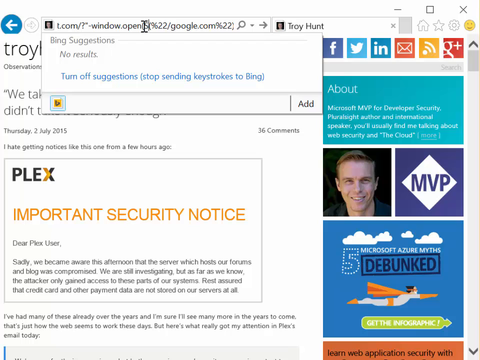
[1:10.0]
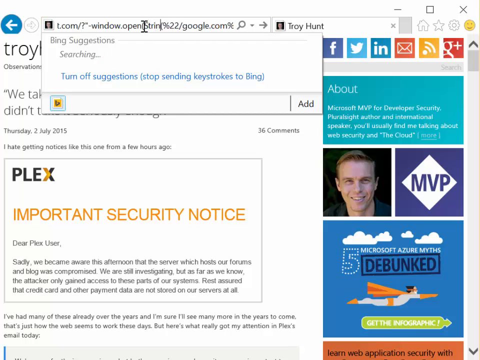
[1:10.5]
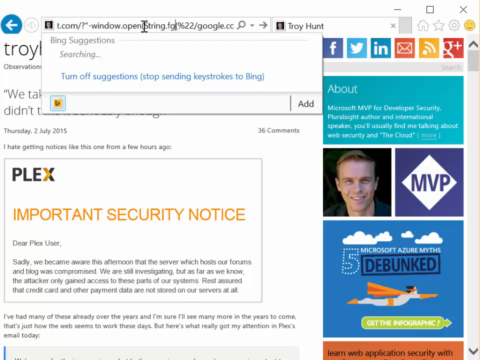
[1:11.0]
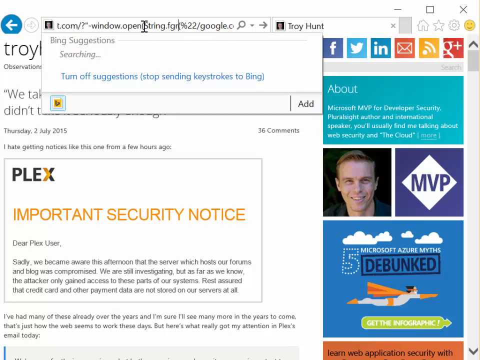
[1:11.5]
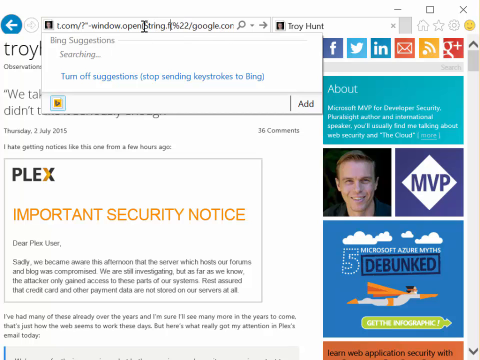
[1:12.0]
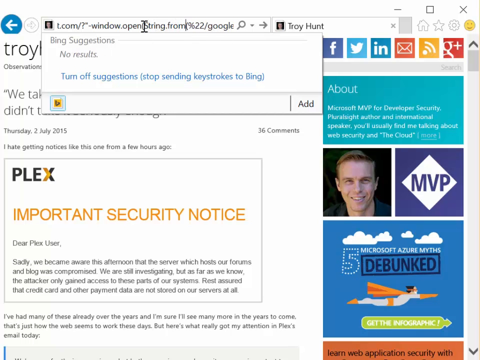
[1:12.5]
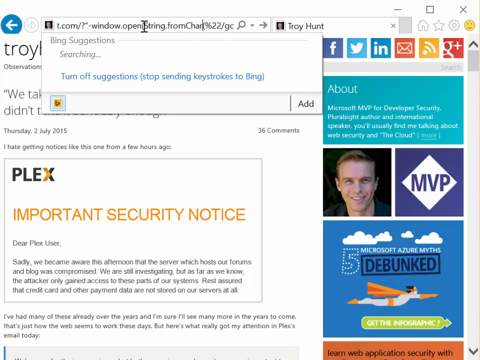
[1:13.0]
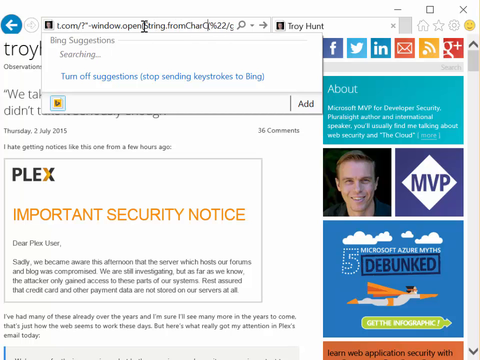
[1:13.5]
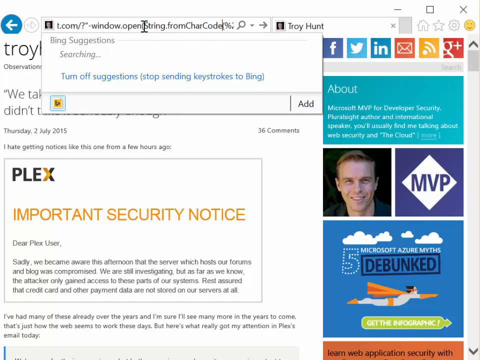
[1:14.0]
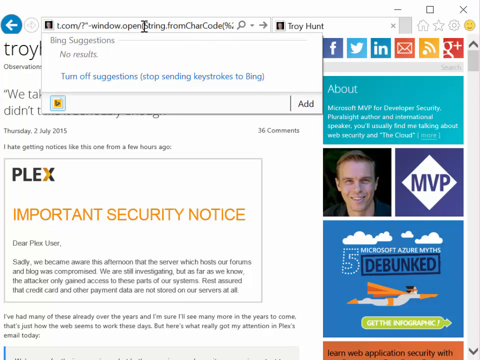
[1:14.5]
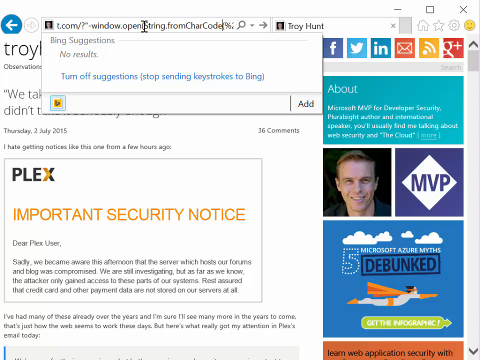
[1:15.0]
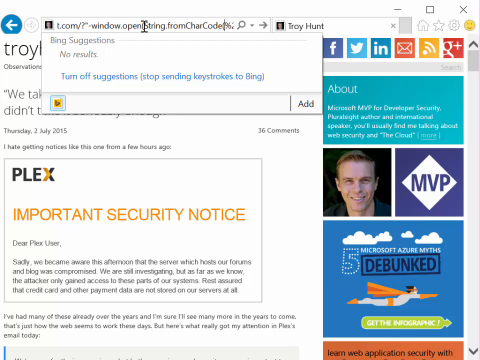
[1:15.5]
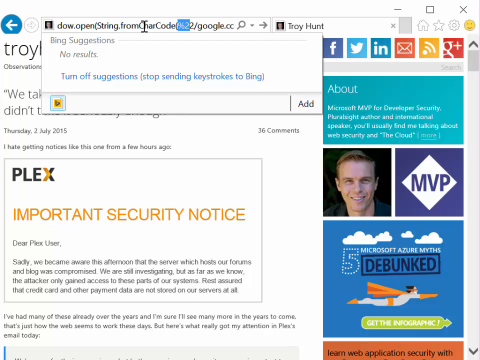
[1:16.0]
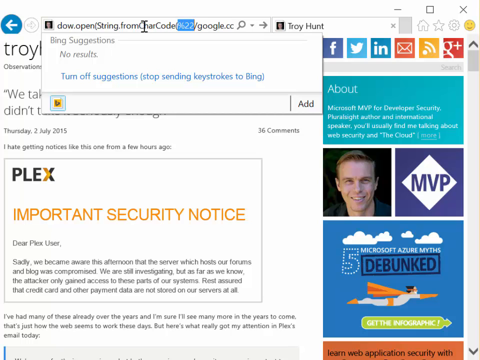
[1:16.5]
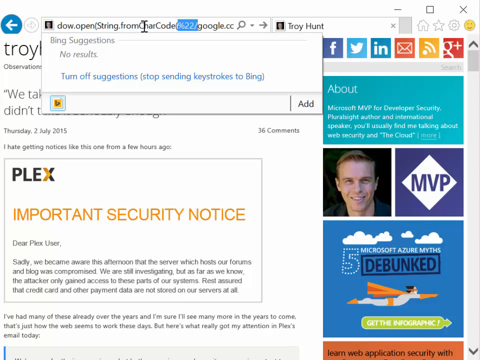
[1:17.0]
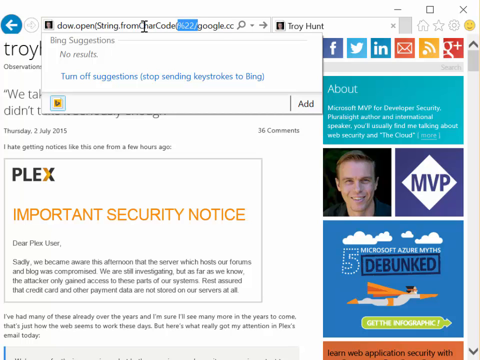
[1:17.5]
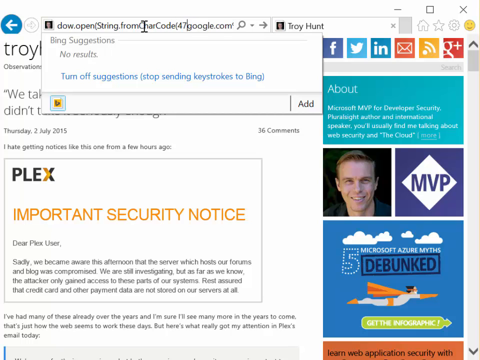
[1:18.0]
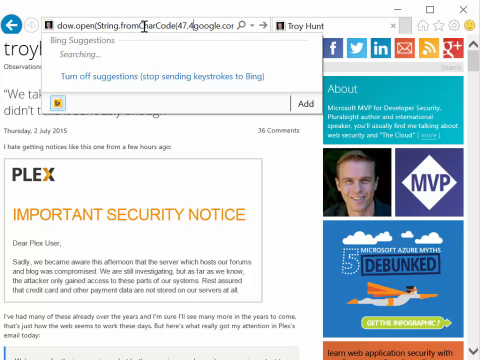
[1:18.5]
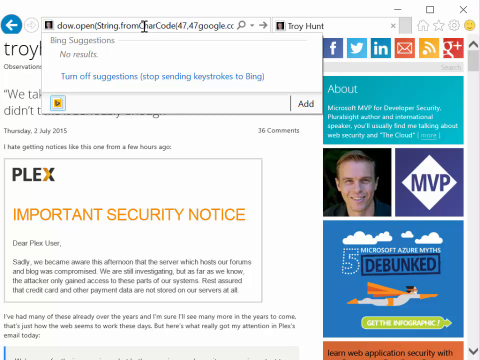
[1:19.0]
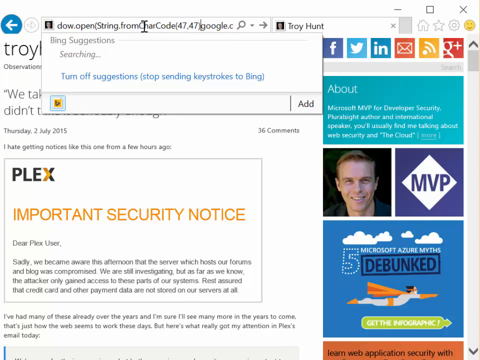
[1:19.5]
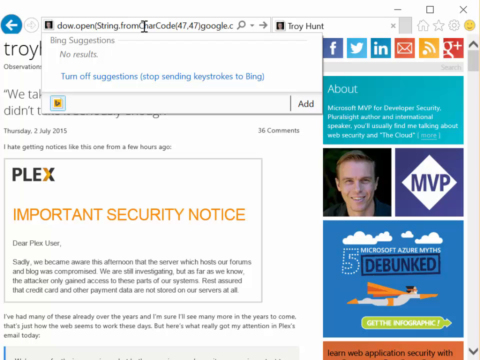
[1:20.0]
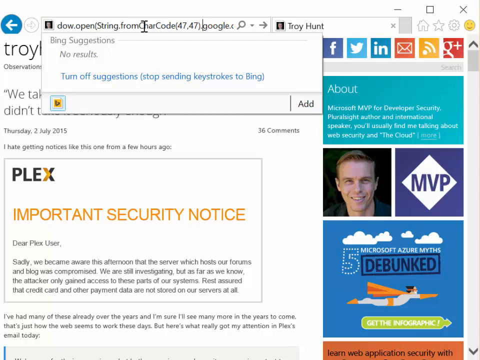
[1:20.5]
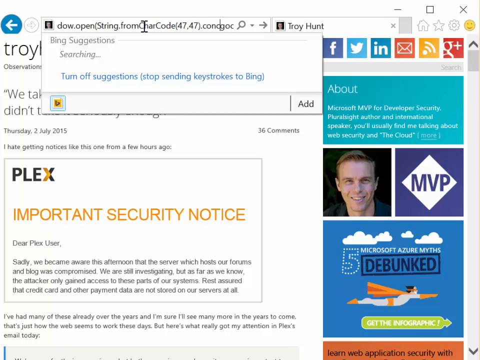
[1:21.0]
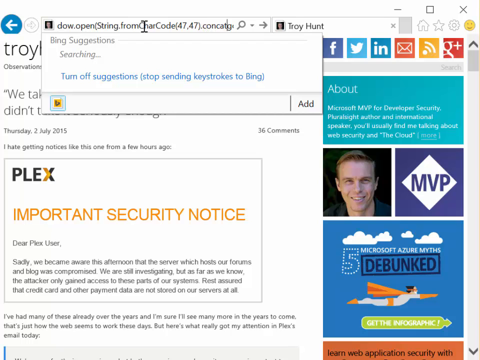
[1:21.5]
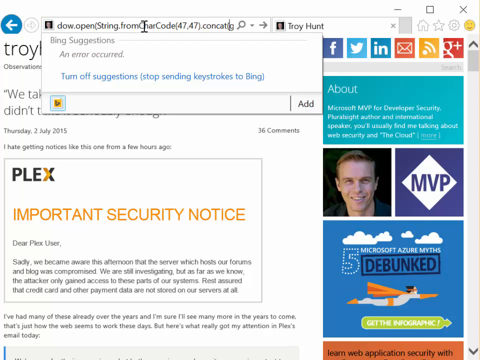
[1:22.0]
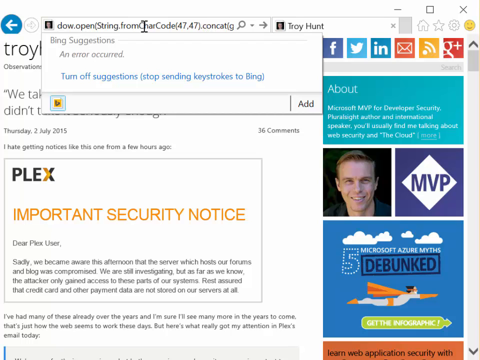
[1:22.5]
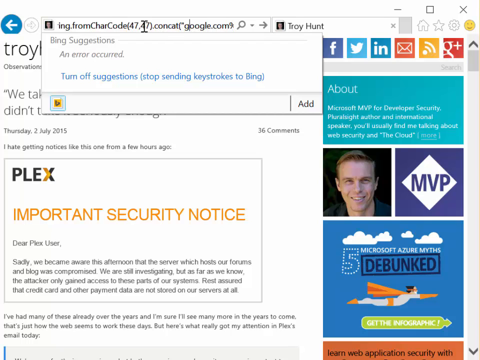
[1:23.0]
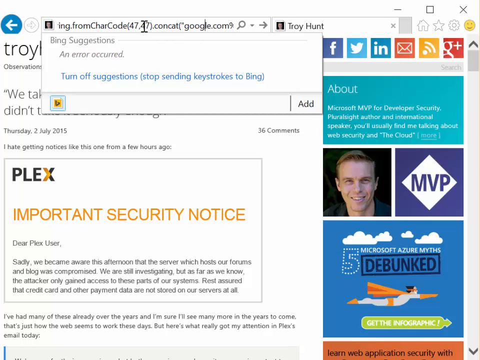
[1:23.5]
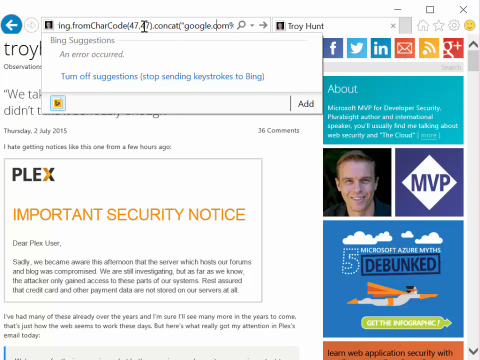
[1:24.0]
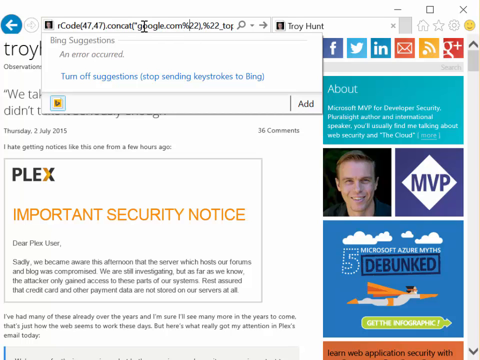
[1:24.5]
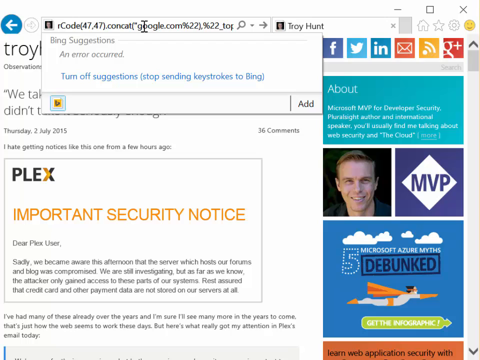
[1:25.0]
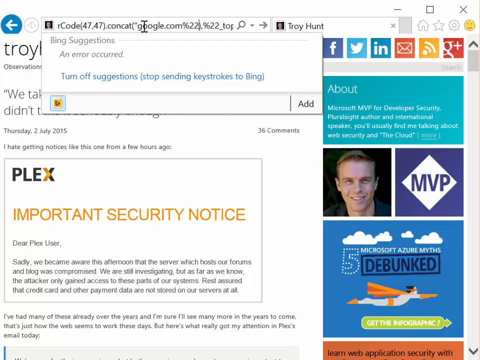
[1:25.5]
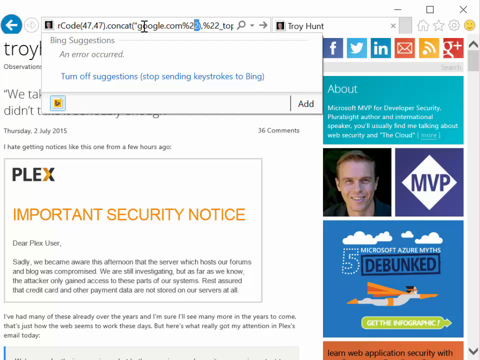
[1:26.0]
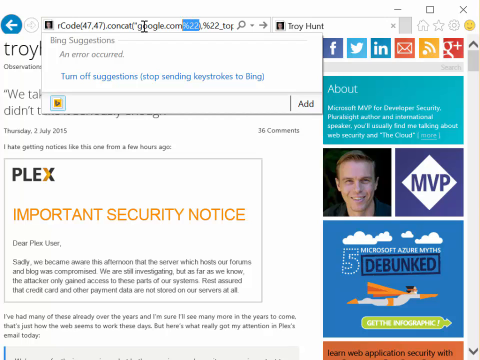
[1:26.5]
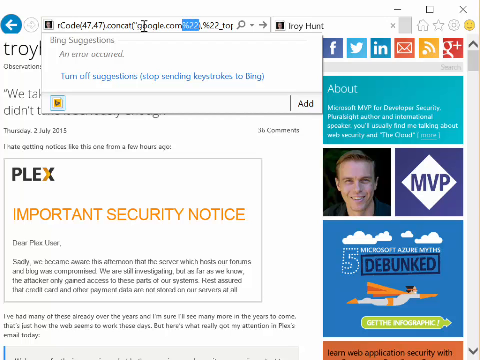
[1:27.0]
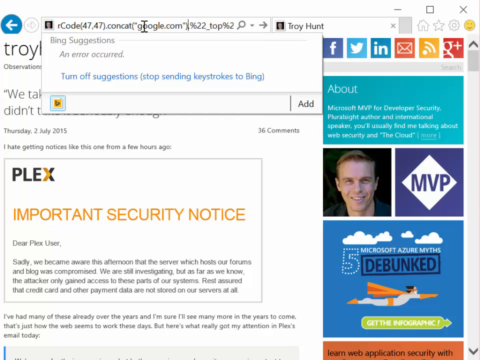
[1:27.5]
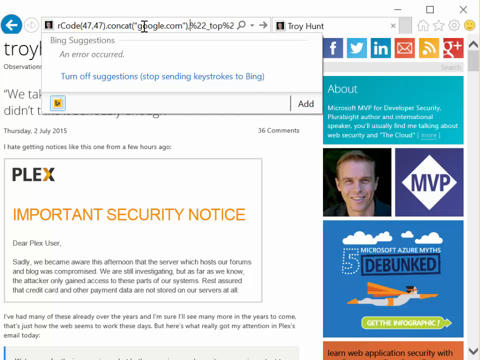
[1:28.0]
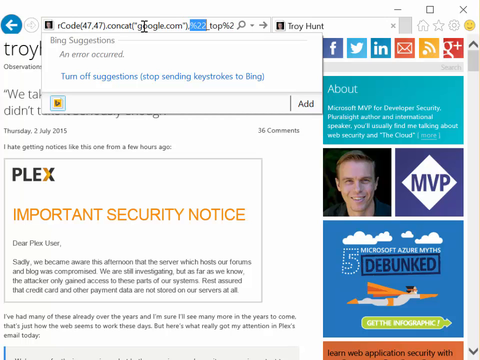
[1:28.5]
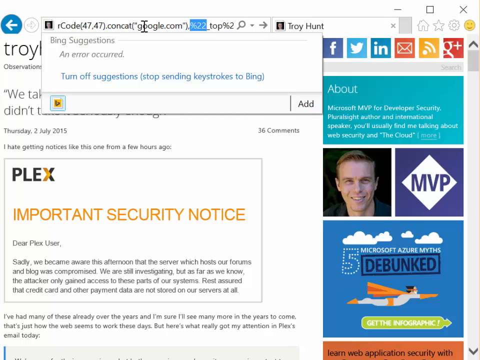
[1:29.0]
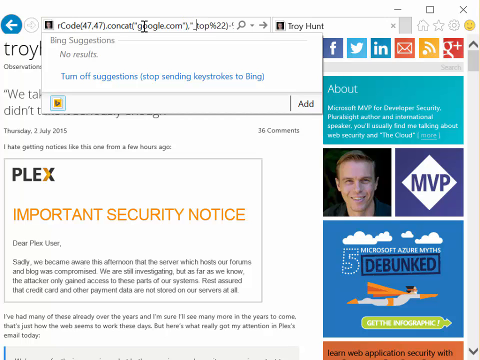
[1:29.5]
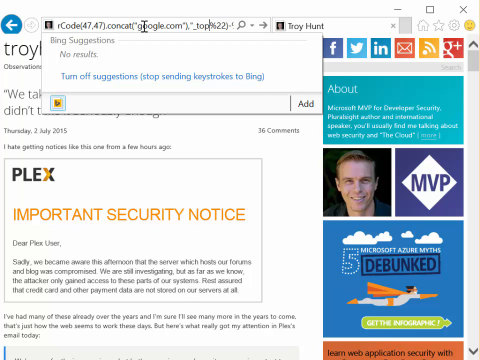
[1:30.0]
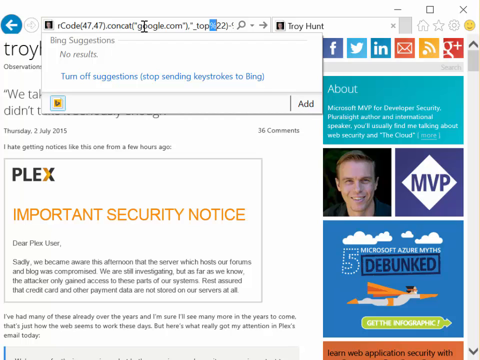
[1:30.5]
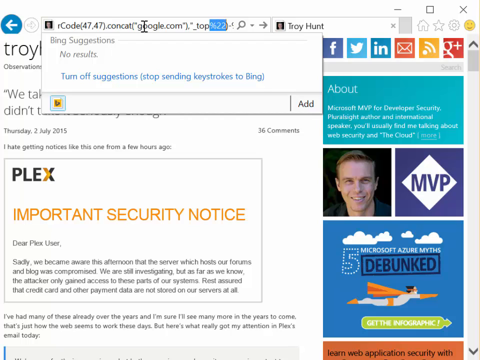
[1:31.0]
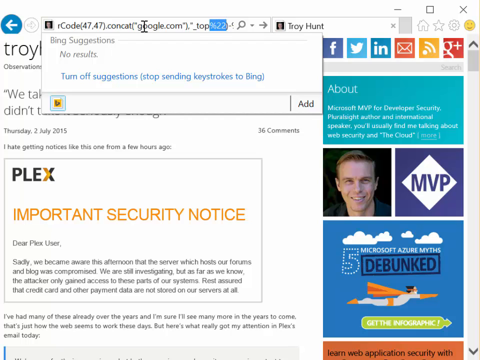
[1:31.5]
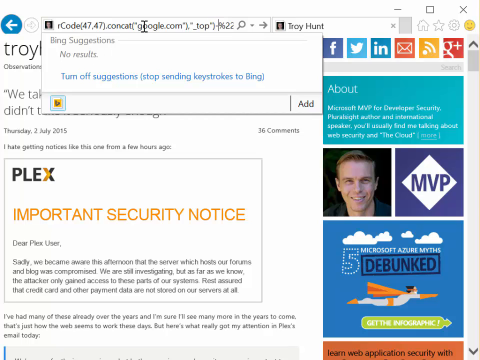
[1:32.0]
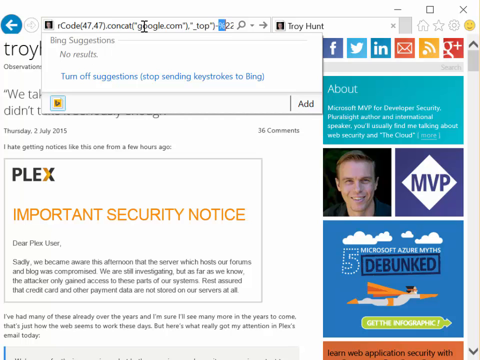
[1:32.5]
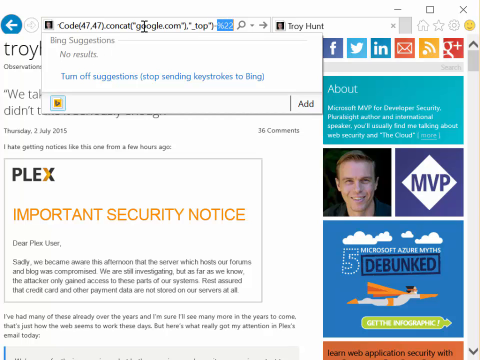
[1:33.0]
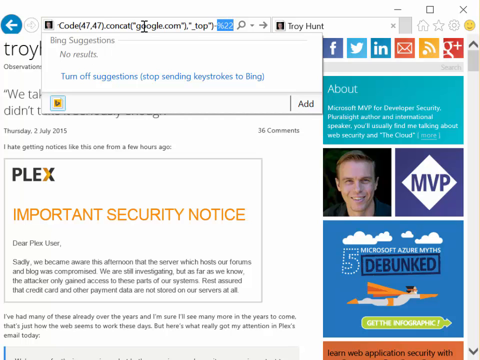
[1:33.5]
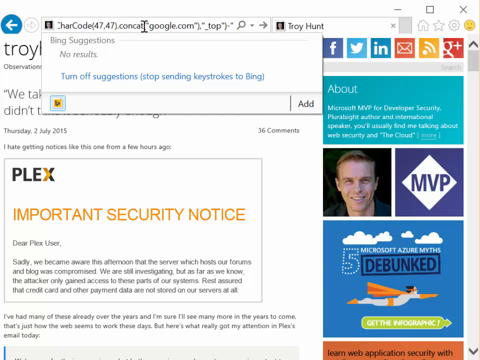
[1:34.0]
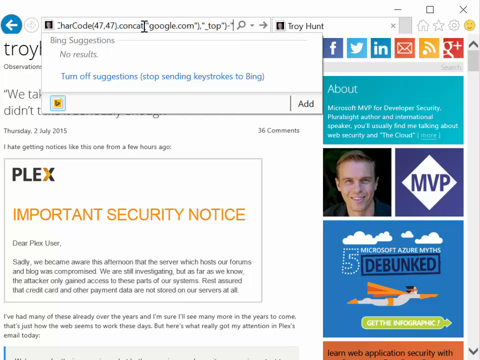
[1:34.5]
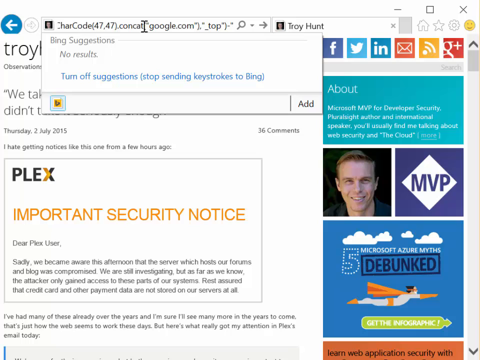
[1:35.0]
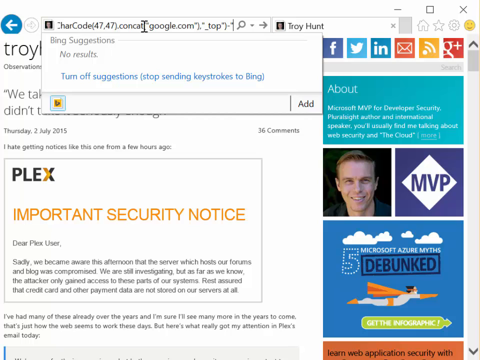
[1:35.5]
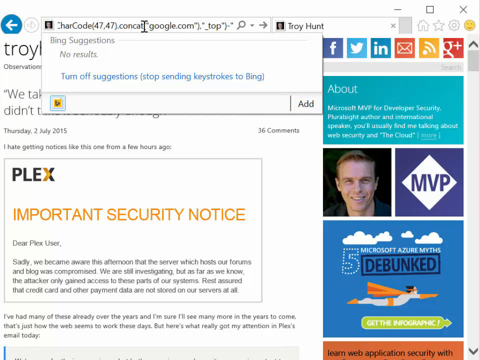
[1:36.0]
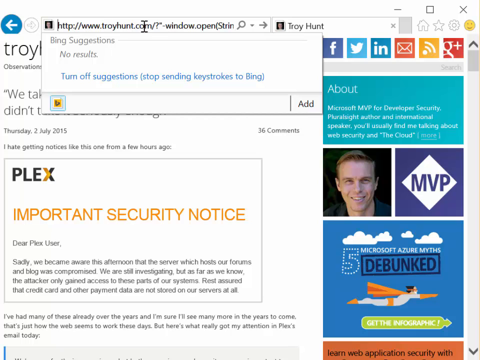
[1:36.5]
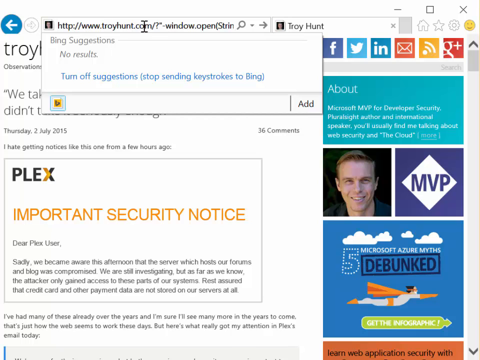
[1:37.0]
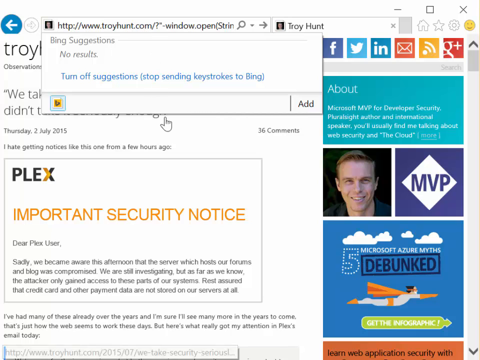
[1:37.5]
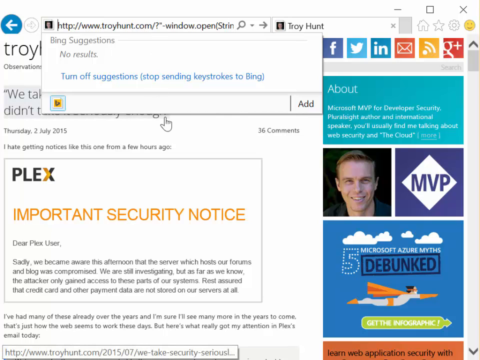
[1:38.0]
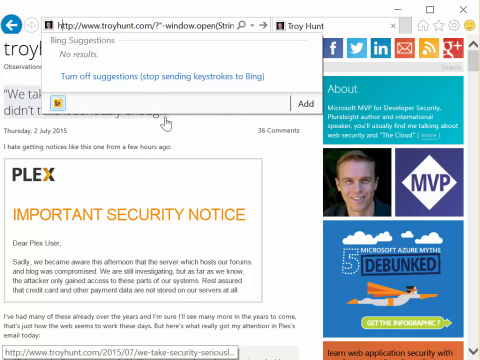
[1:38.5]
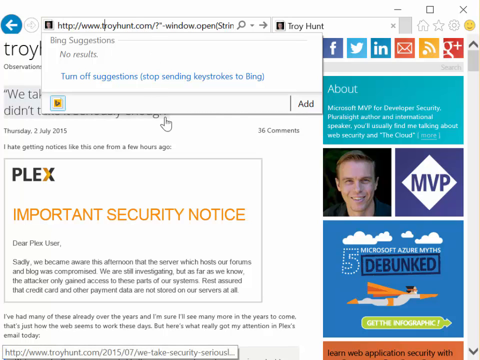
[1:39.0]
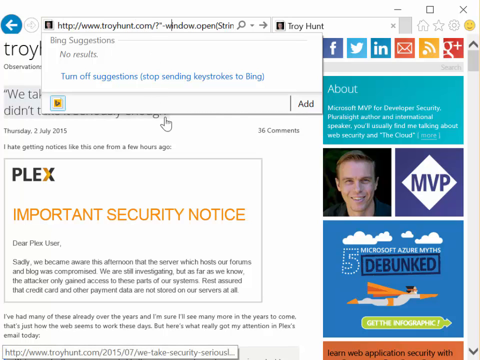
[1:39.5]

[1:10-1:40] The user is still on the TroyHunt.com home page, typing instructions into the address bar after the actual address of the page. The typed text appears to include "string from char code" and "google.com," with many different items in quotation marks. The entries look like lines of code being typed directly into the address bar; the end goal is unclear.